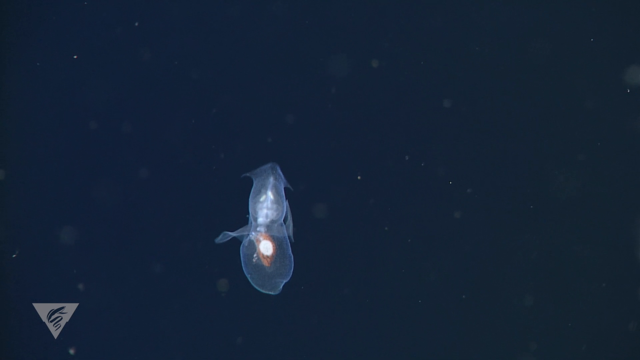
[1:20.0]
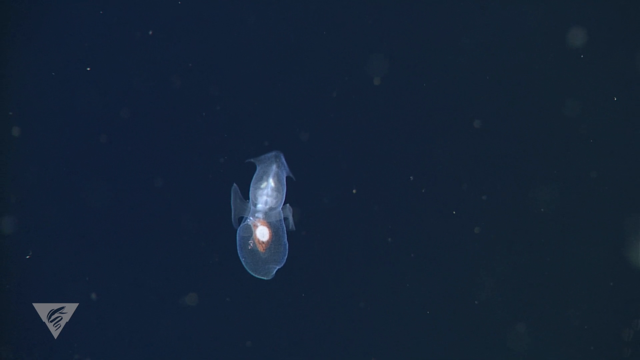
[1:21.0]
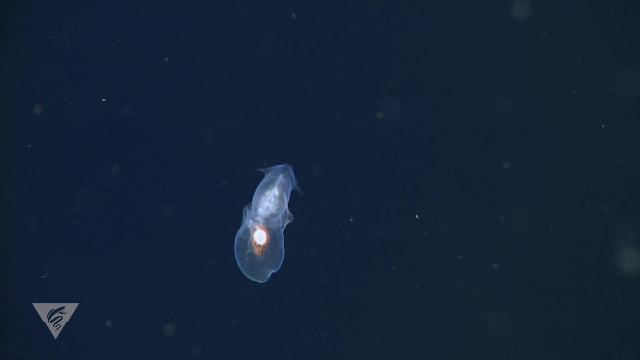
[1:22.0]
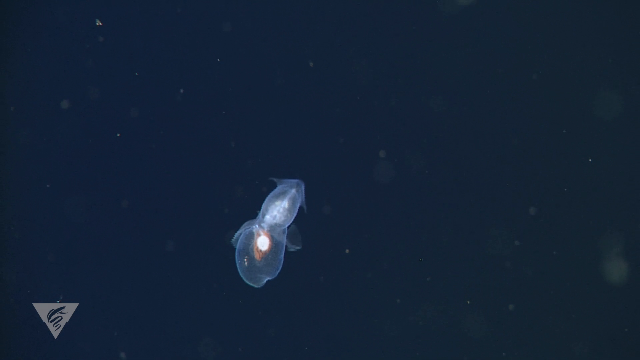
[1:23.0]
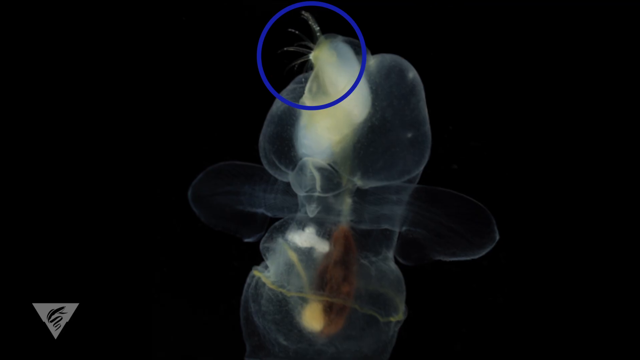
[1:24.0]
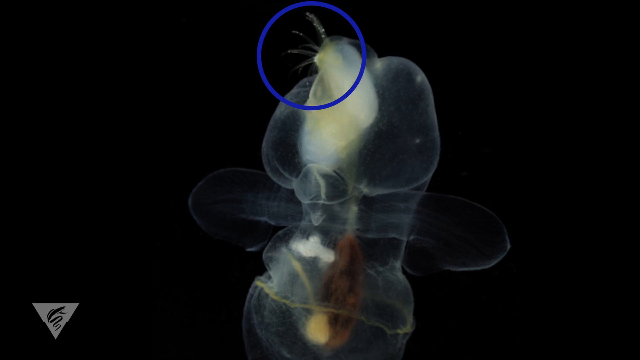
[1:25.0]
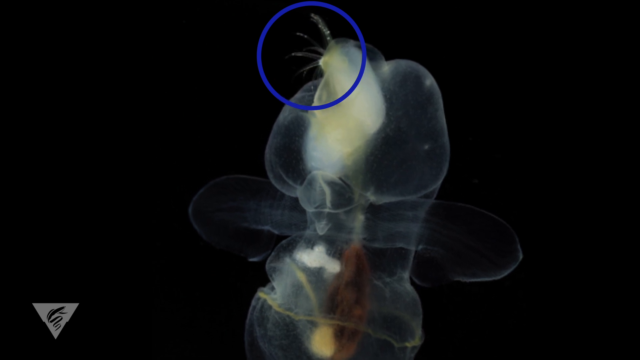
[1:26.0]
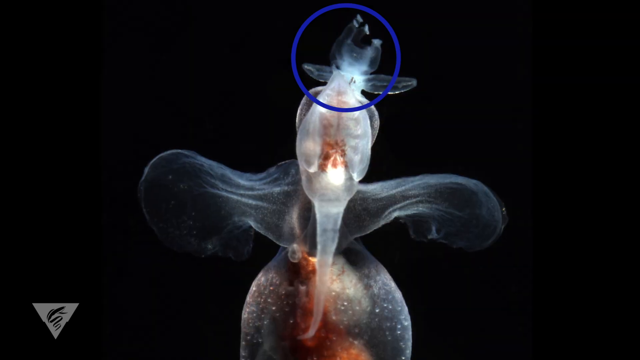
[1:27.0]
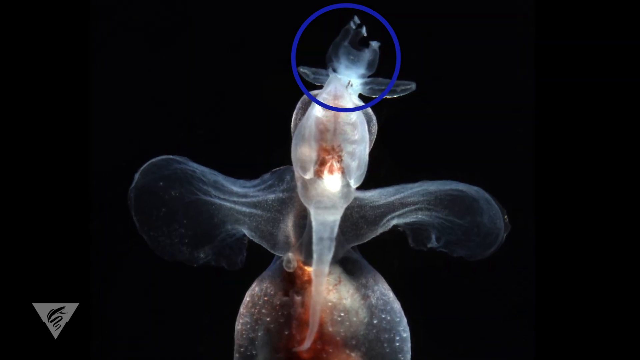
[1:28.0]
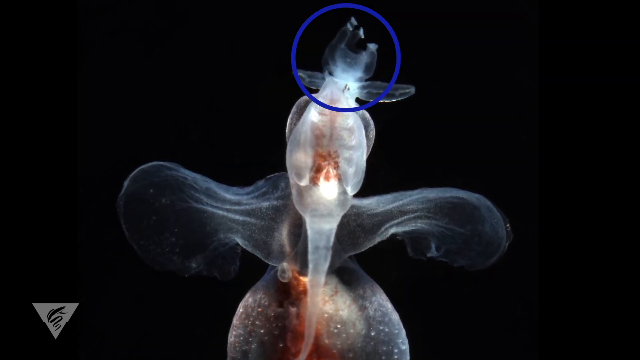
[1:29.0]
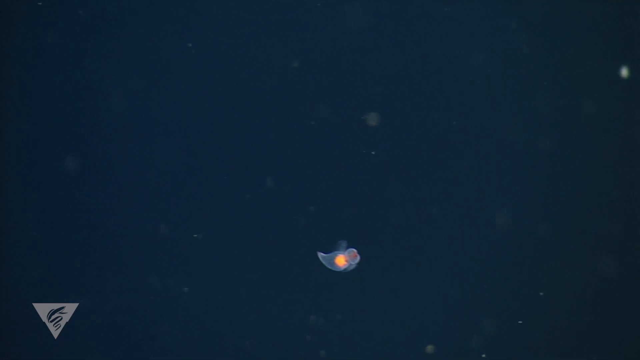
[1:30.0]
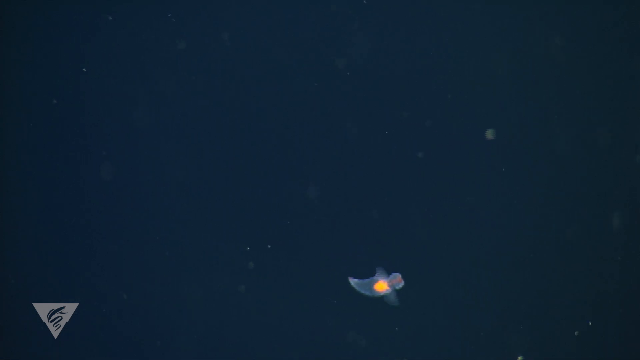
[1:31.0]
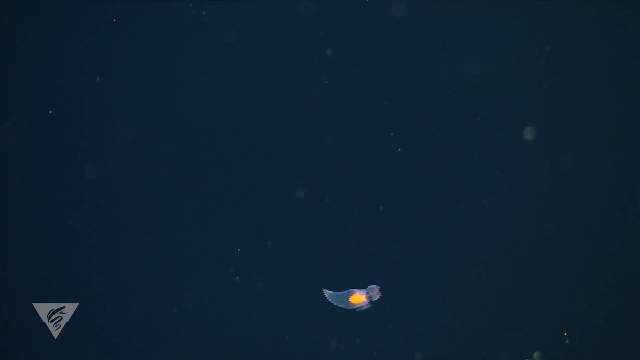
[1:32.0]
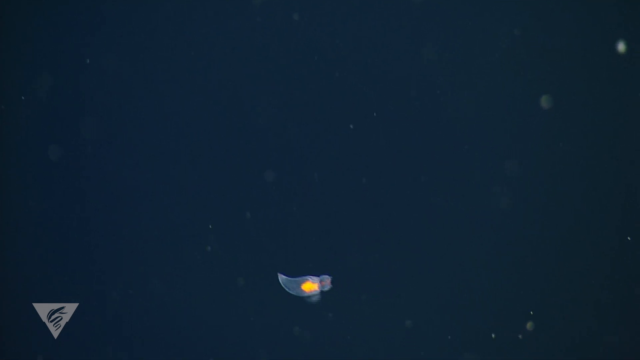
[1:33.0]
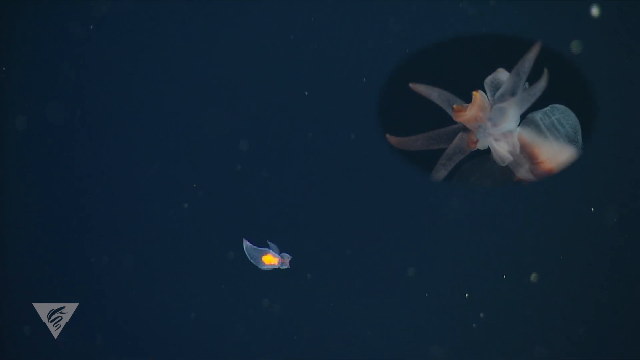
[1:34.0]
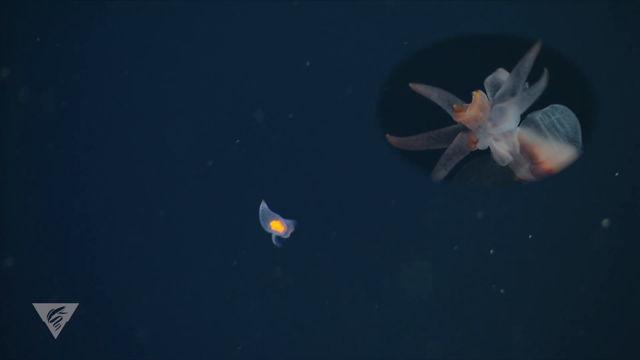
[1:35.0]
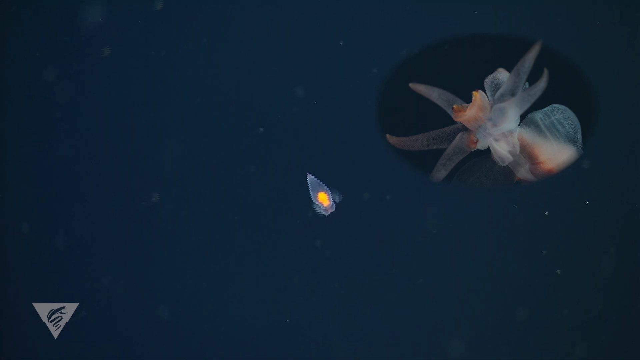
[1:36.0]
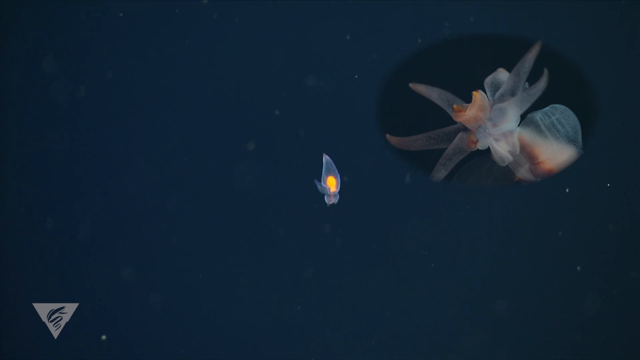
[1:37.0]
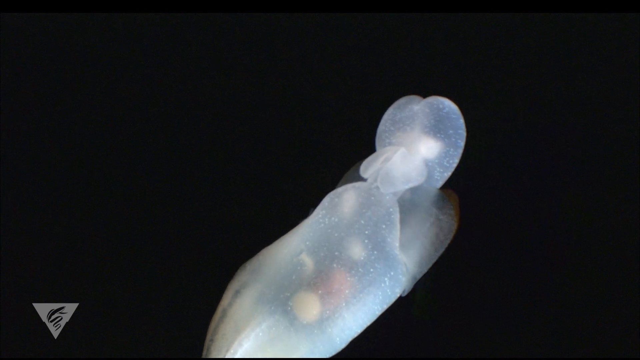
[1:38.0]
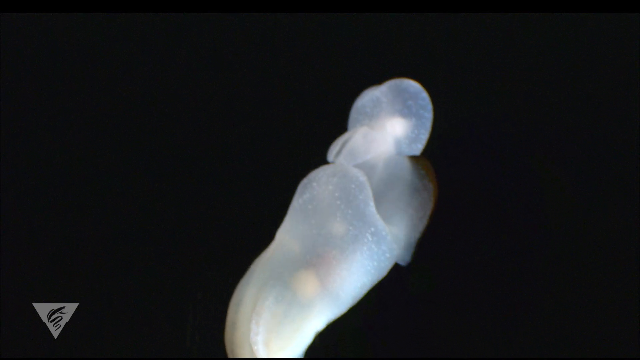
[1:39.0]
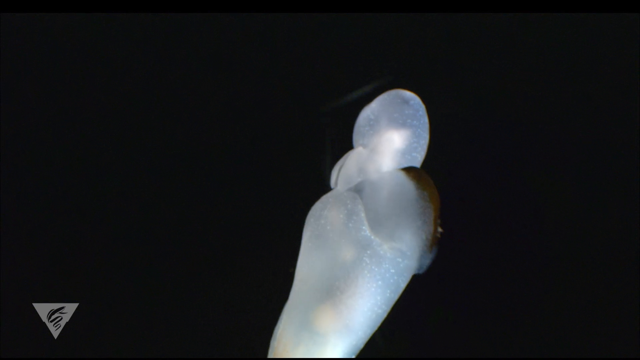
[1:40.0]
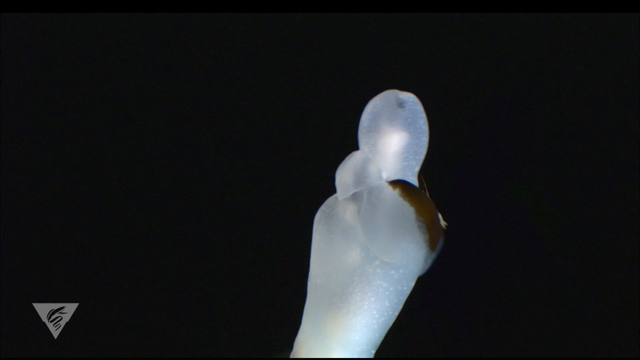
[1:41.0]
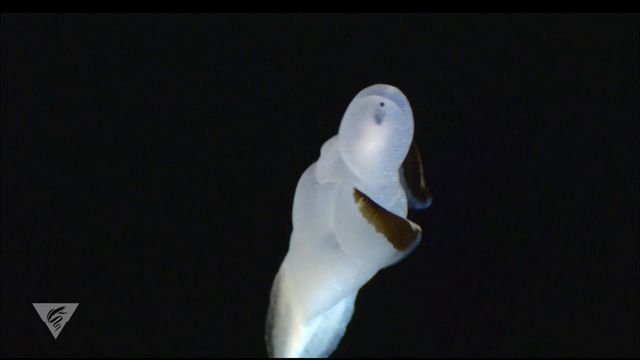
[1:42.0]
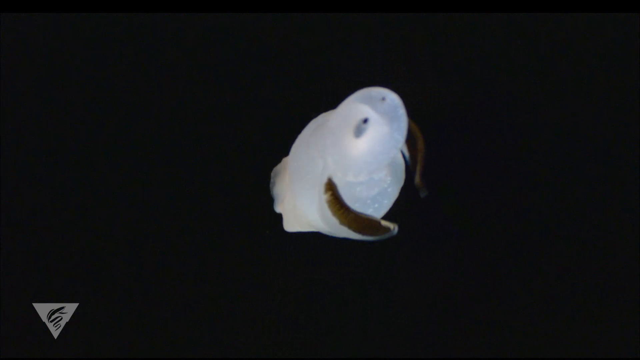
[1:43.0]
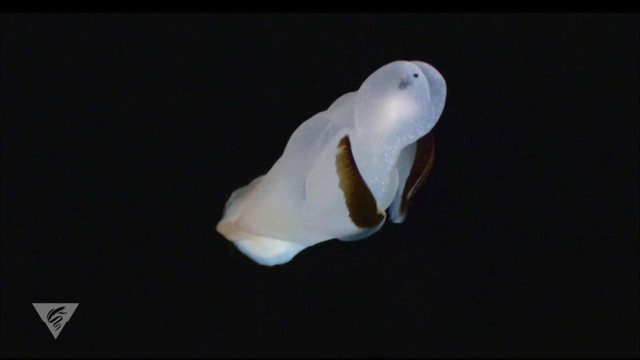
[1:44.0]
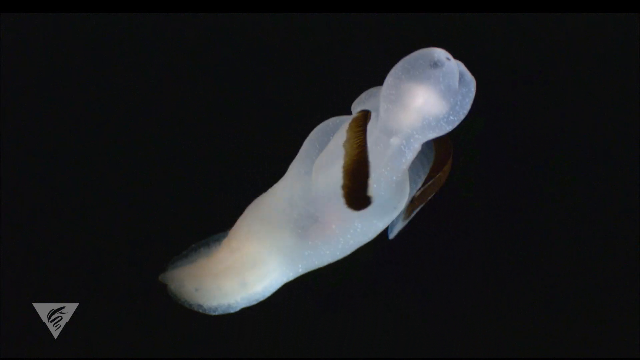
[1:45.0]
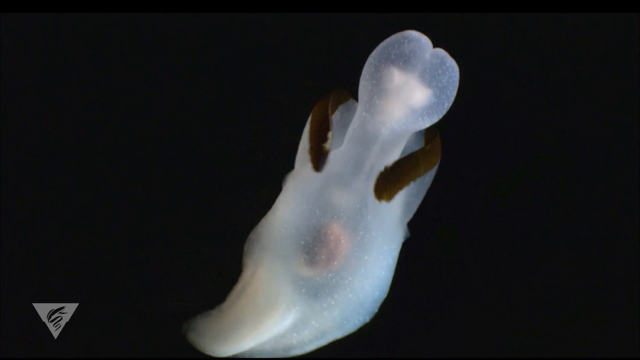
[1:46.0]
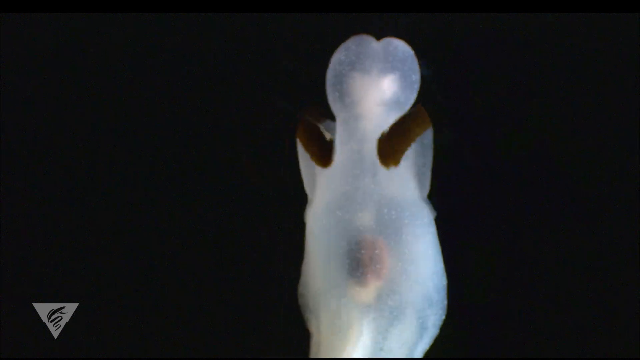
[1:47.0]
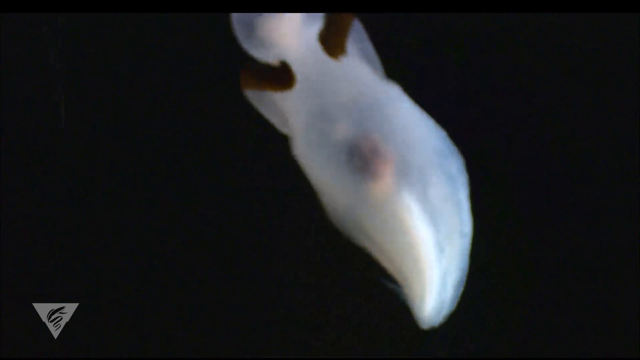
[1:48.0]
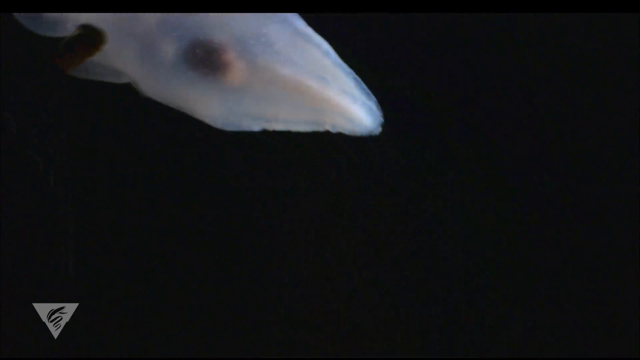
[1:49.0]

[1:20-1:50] A pteropod propels itself through the sea with little flippers that look like small wings on each side of its body; the flippers move up and down independently. The pteropod is translucent, so the organs inside its body are visible. The organs are orange, yellowish and red, and they look like they might be bioluminescent or partially bioluminescent. The next pteropod is white and almost looks like a ghost. It has two flippers on each side of its body that look like wings, with some dark spots on the very ends, and it uses them to propel itself around in the ocean. It is not completely translucent but kind of opaque, though the different colors of the organs inside its body are still visible.